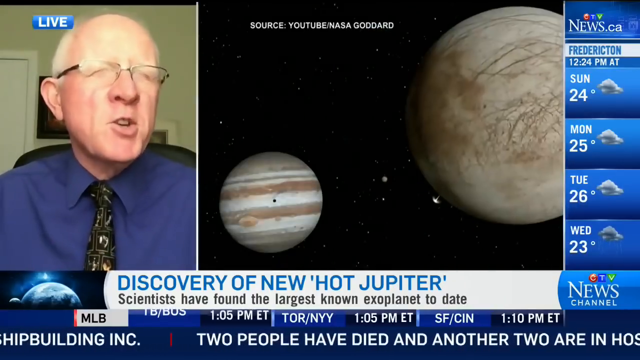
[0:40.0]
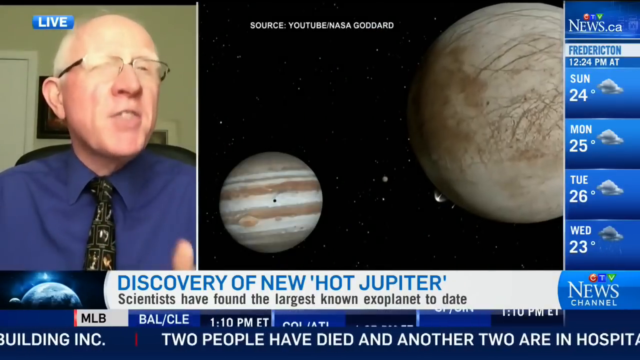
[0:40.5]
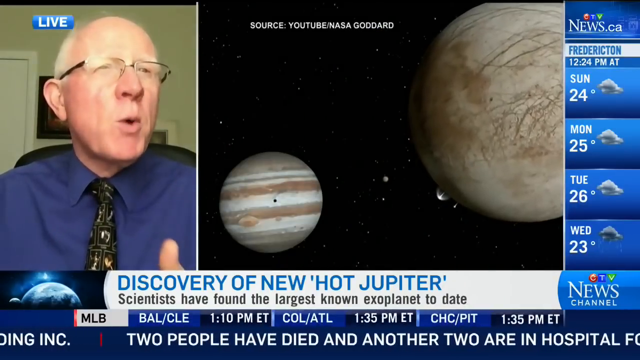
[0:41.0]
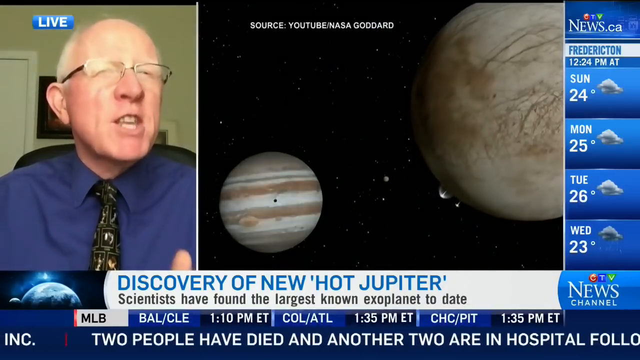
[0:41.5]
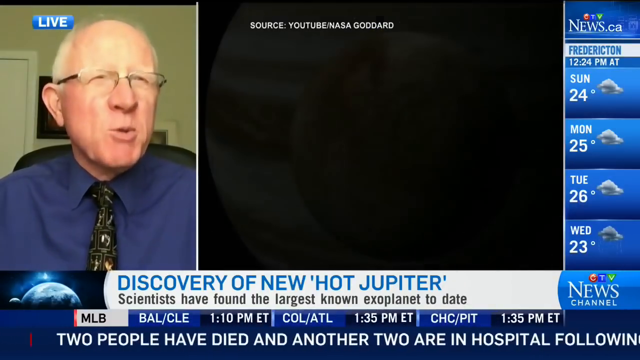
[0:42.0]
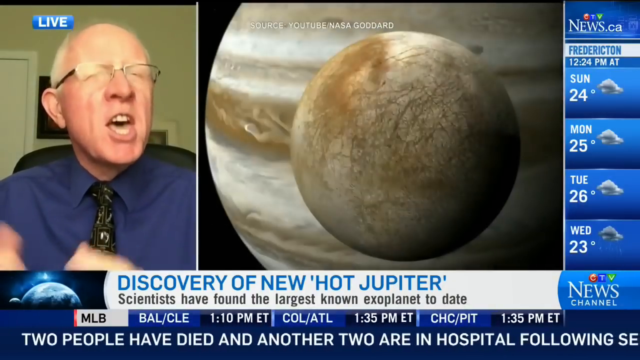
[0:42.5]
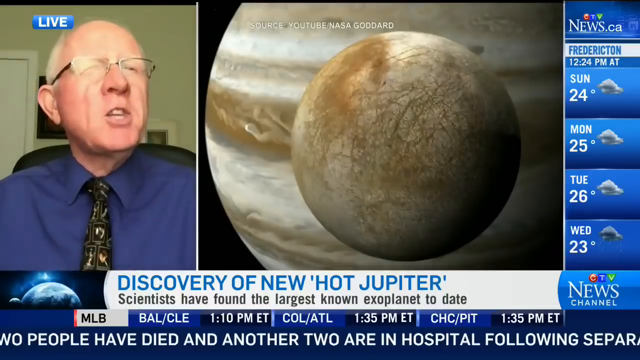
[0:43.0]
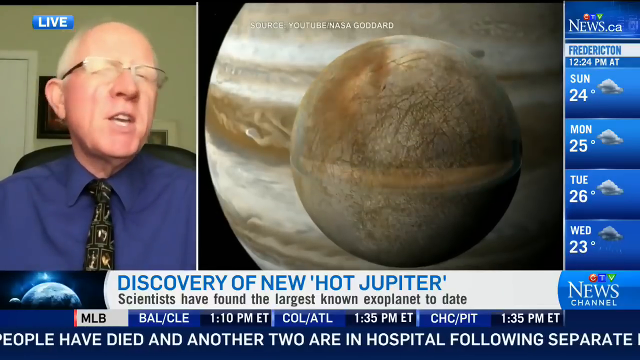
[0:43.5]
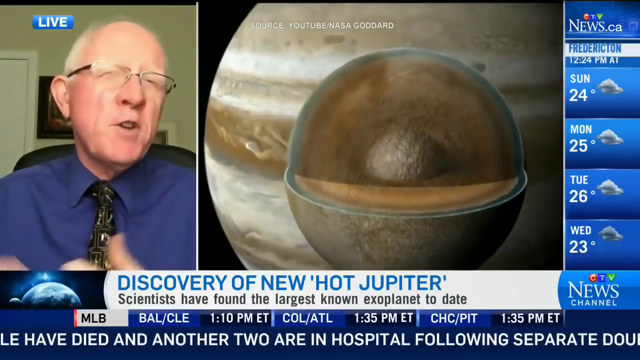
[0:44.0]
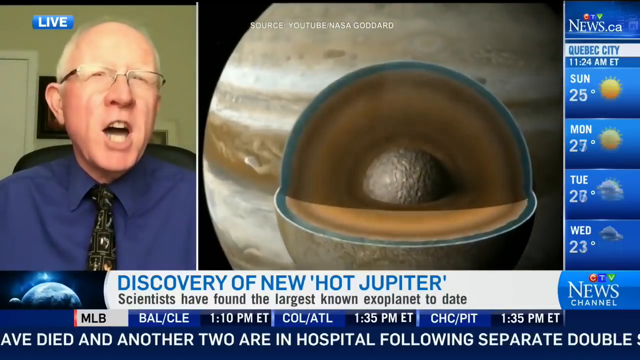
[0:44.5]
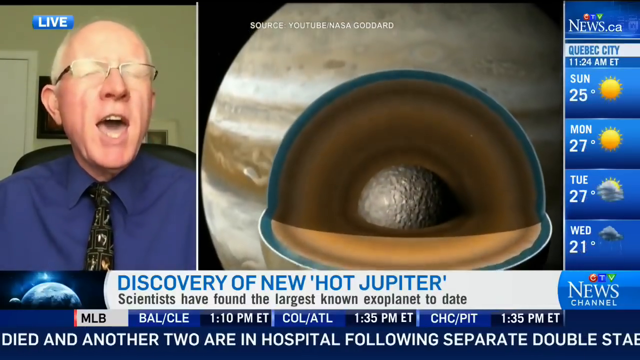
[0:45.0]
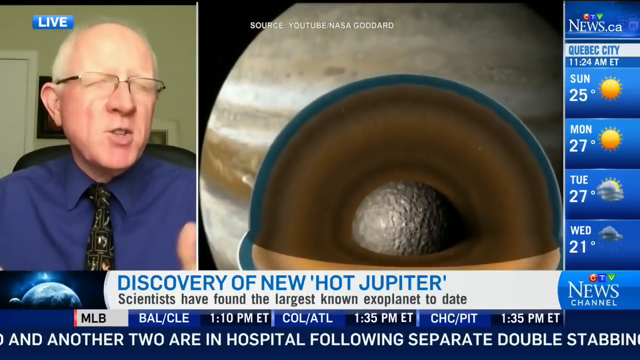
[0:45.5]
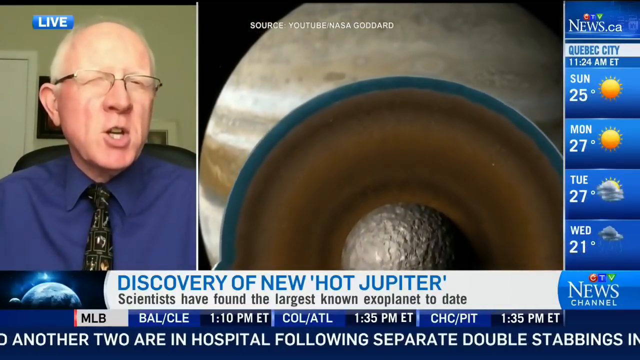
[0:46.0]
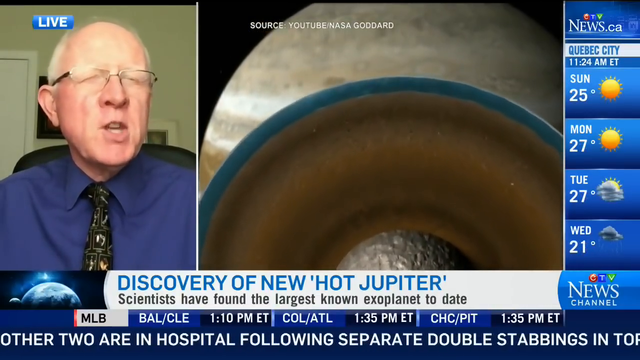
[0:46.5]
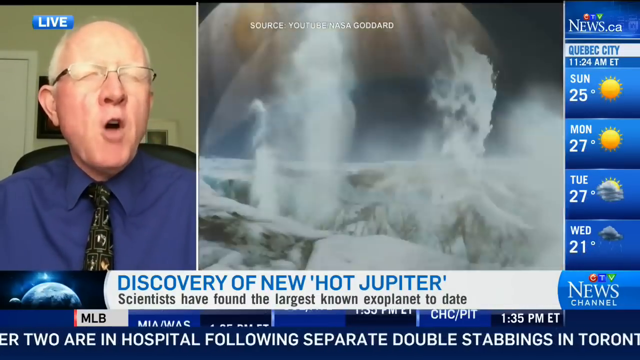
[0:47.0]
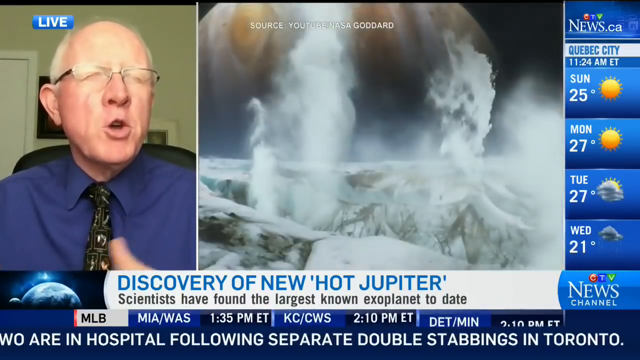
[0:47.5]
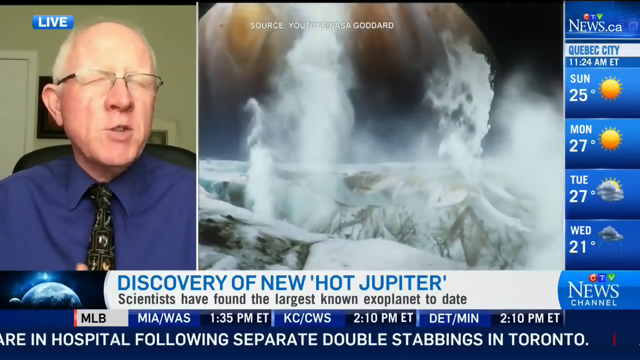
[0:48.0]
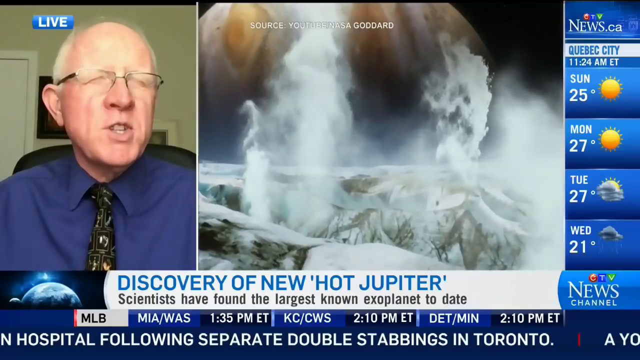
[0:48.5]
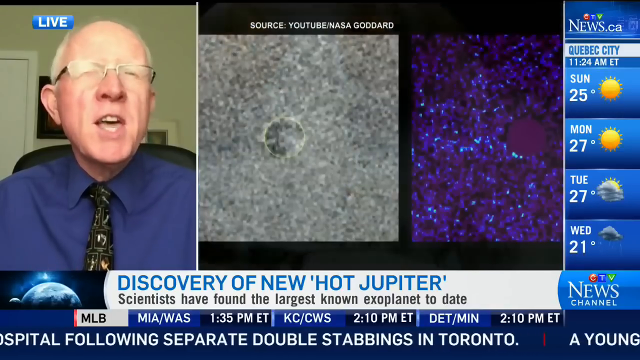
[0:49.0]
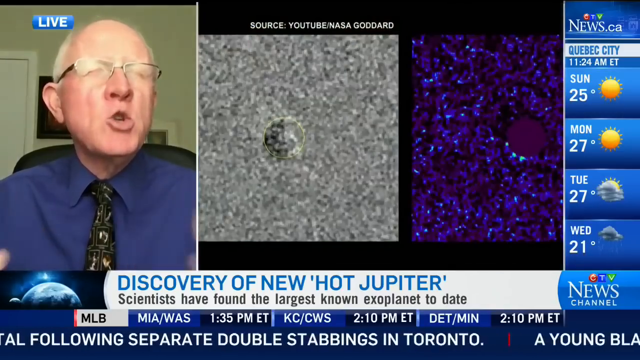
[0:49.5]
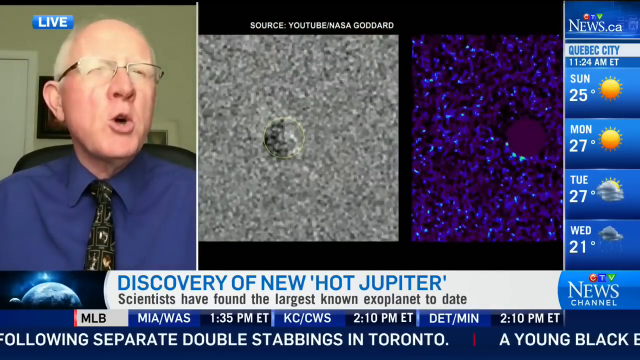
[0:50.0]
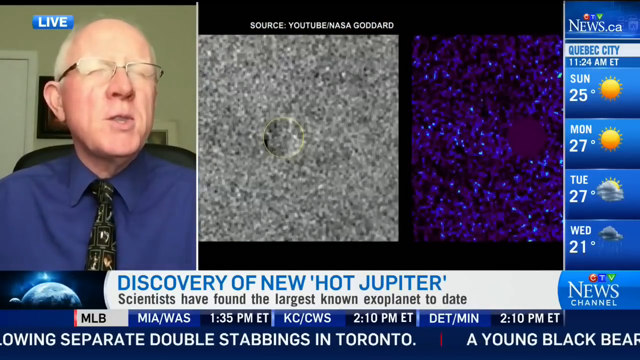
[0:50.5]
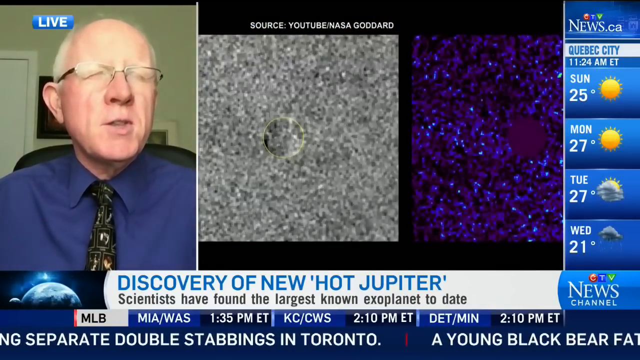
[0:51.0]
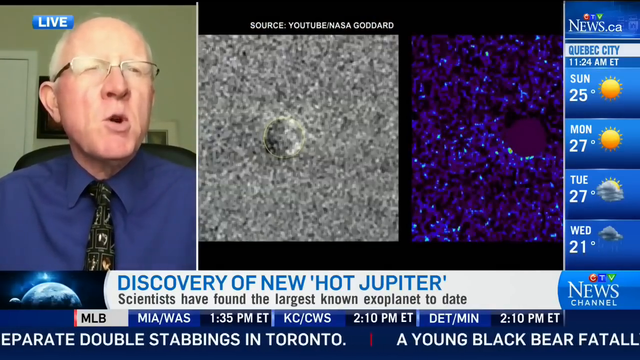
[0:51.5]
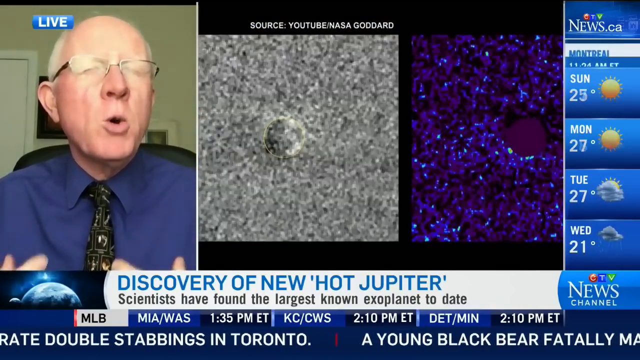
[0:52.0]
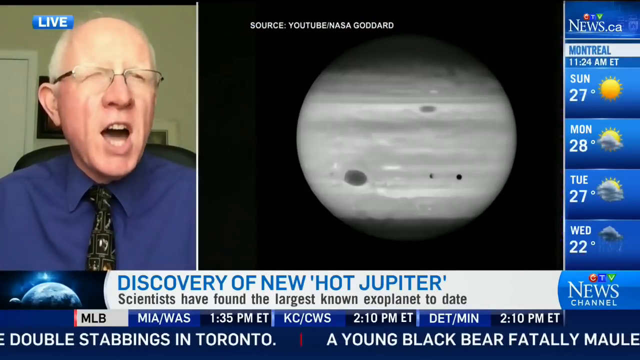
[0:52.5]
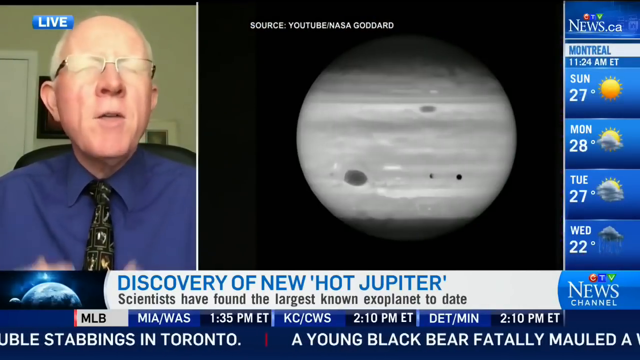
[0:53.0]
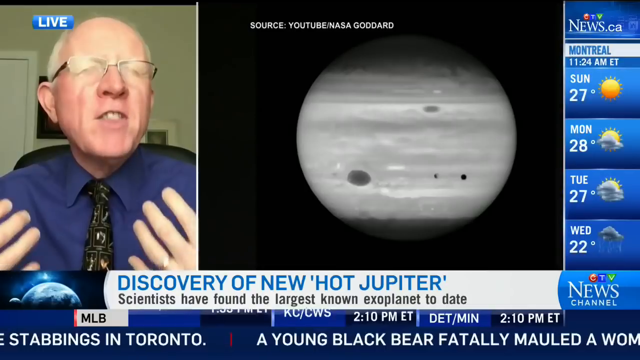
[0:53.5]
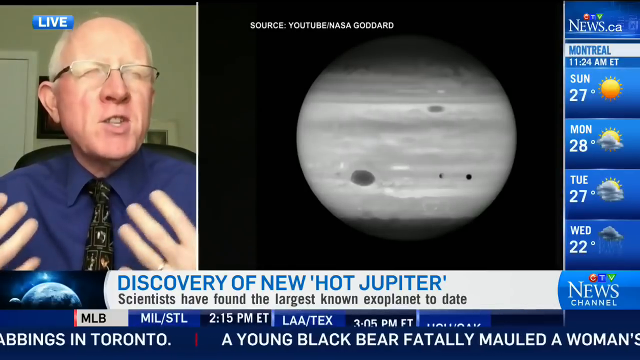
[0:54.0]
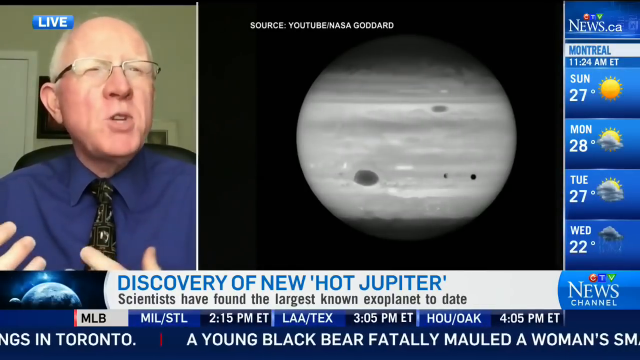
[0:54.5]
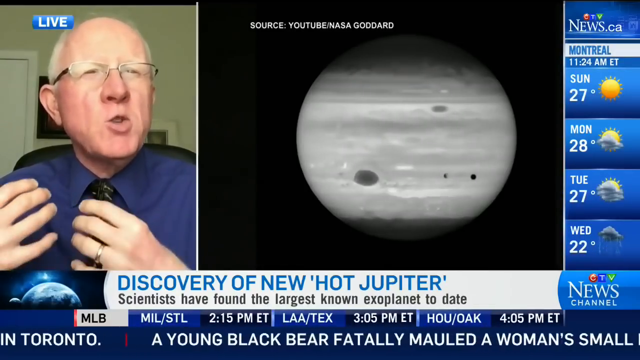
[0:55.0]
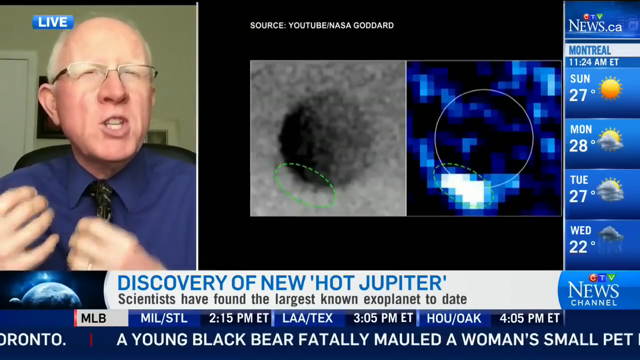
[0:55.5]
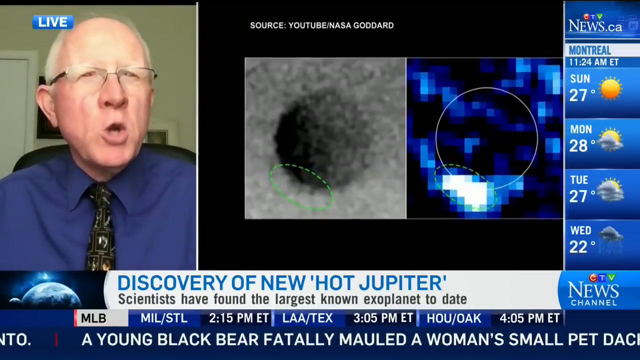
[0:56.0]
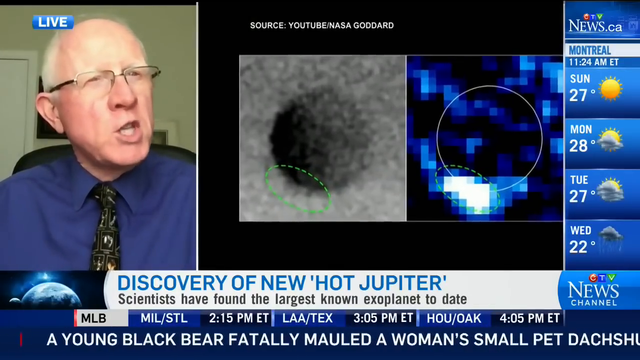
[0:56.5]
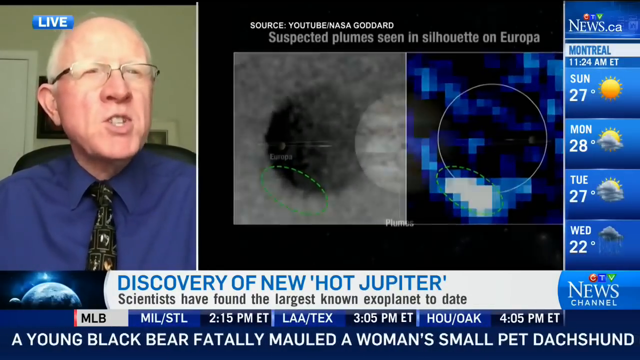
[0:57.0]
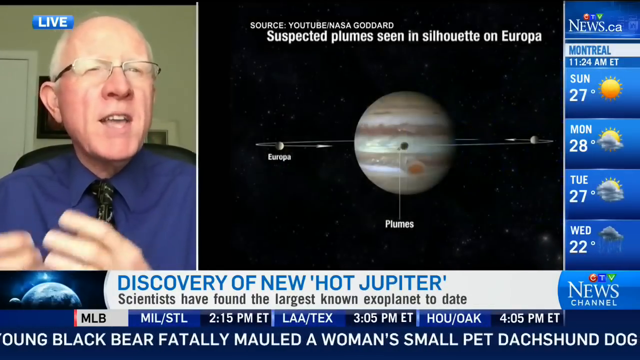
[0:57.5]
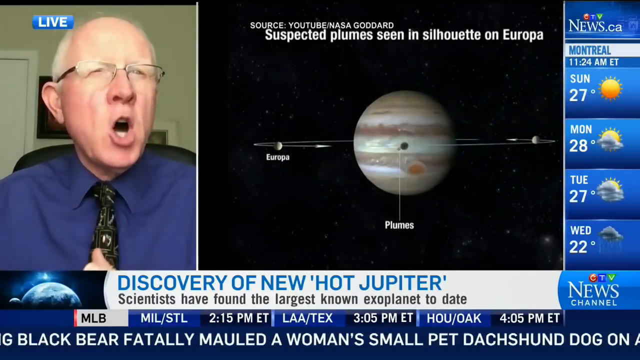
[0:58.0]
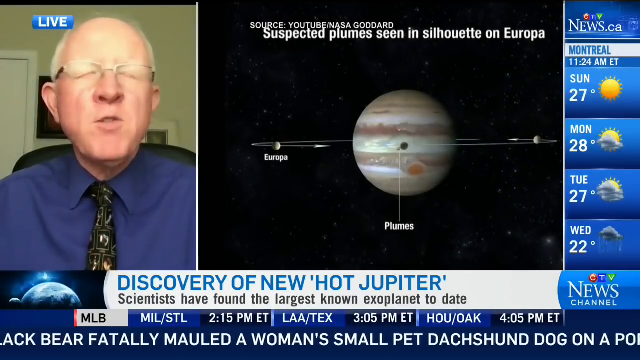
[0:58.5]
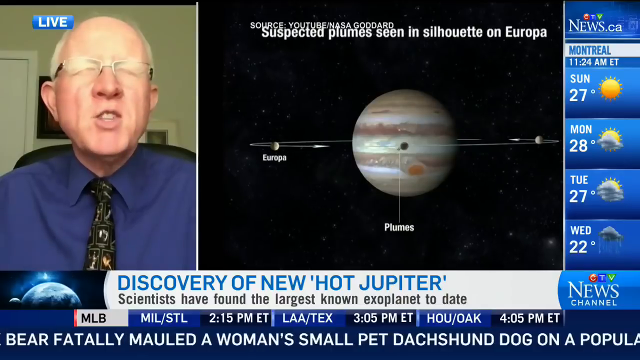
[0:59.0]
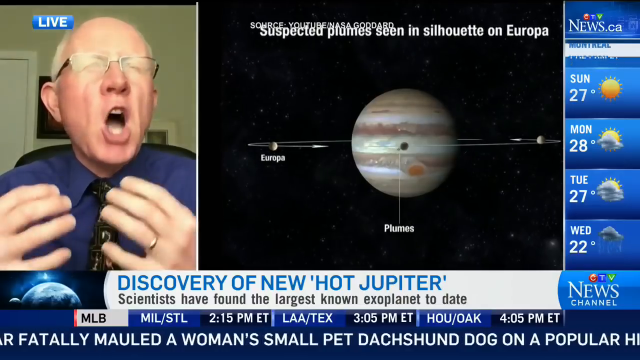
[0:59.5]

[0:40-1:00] Paul Delaney shows images of Jupiter with its famous red spots, along with its moon Europa, apparently an icy moon. The images were obtained from YouTube and were apparently ultimately collected by NASA. Europa is seen going around Jupiter, with plumes in silhouette on Europa. The weather for Quebec City follows: 25 degrees and blazing sunshine on Sunday, 27 degrees and blazing sunshine on Monday, 27 degrees and sunny intervals on Tuesday, and 21 degrees and cloudy on Wednesday. A news item reports that a young black bear has mauled a pet Dachshund to death on a popular hiking trail. The forecast for Fredericton, New Brunswick, shows 24 degrees and cloudy on Sunday, 25 and cloudy on Monday, 26 and cloudy on Tuesday, and even cloudier and 23 degrees on Wednesday.